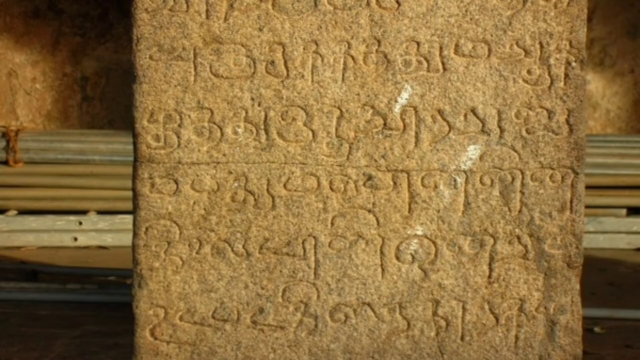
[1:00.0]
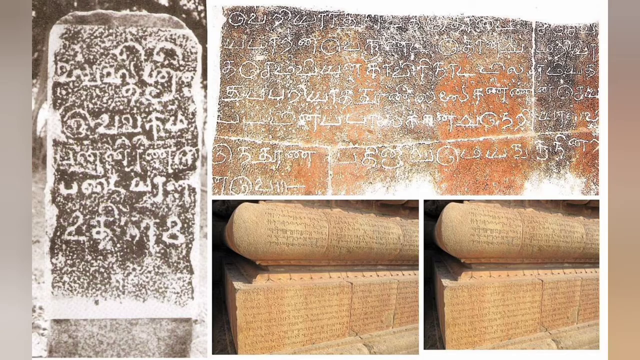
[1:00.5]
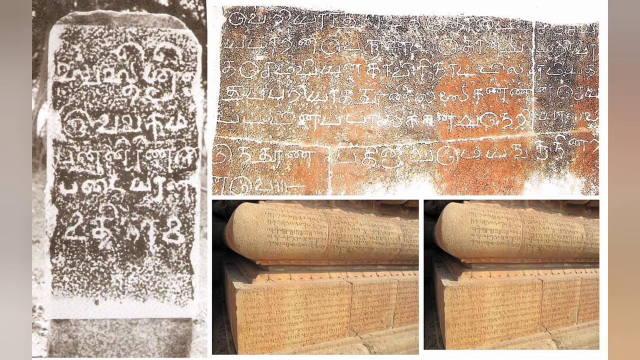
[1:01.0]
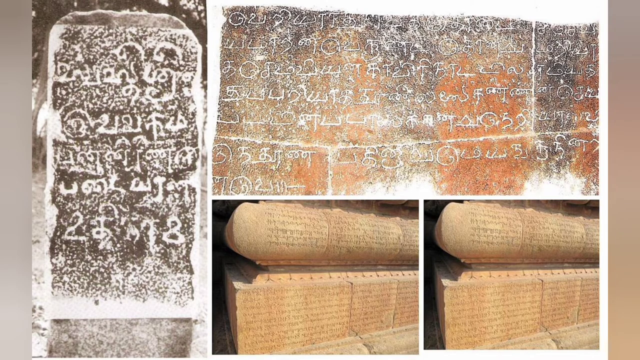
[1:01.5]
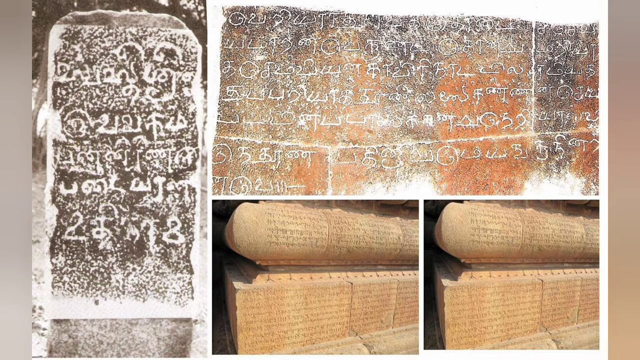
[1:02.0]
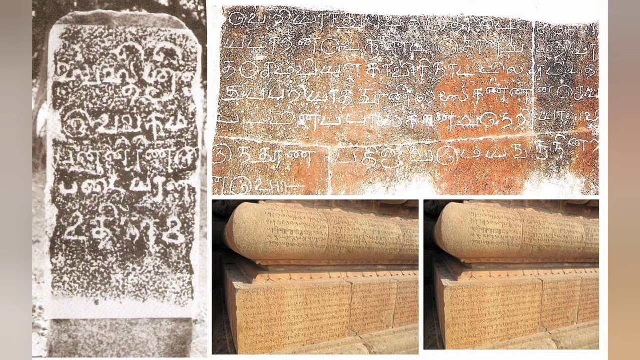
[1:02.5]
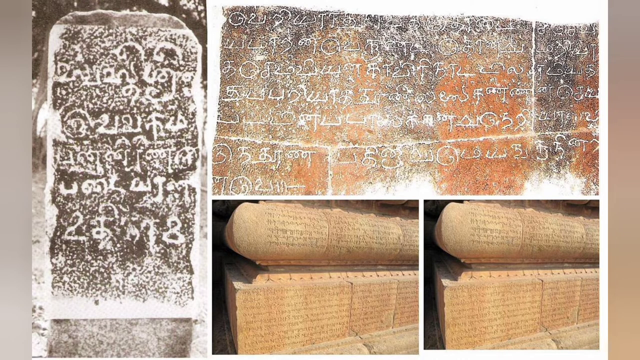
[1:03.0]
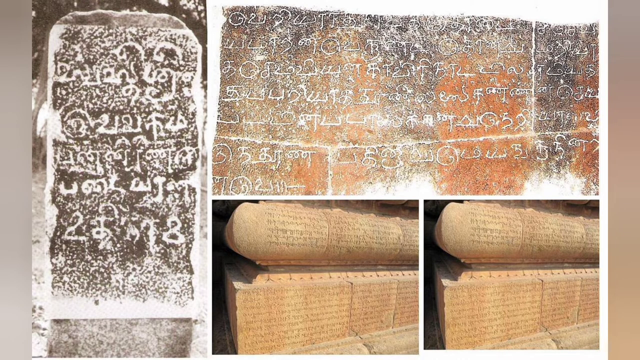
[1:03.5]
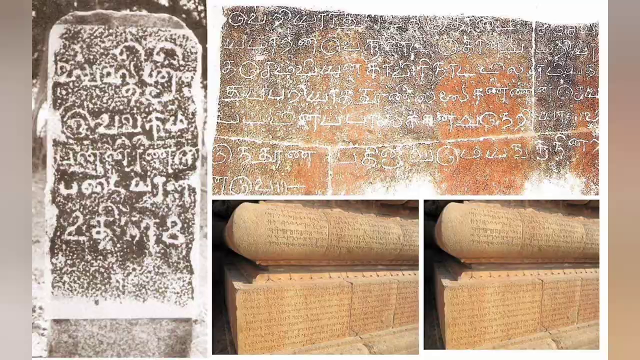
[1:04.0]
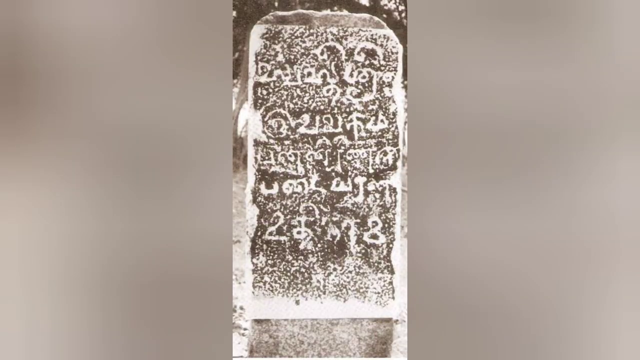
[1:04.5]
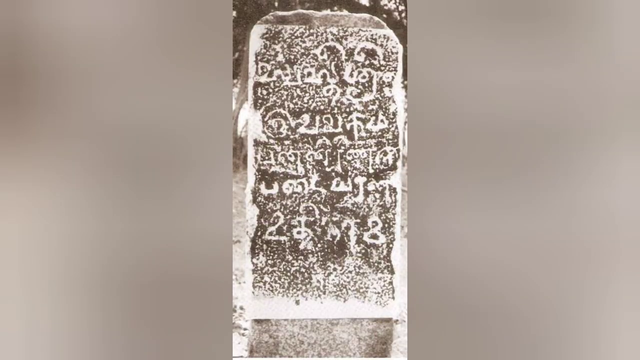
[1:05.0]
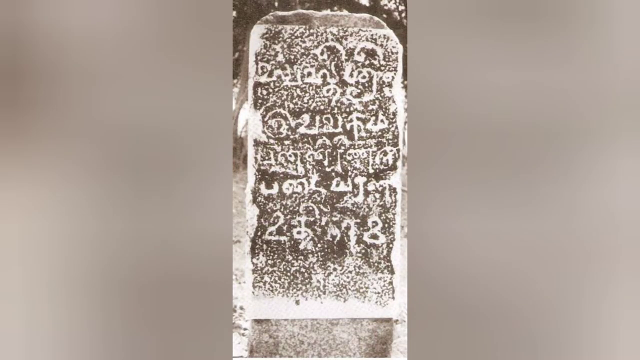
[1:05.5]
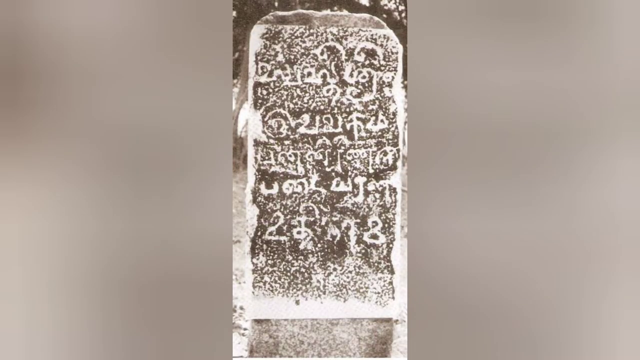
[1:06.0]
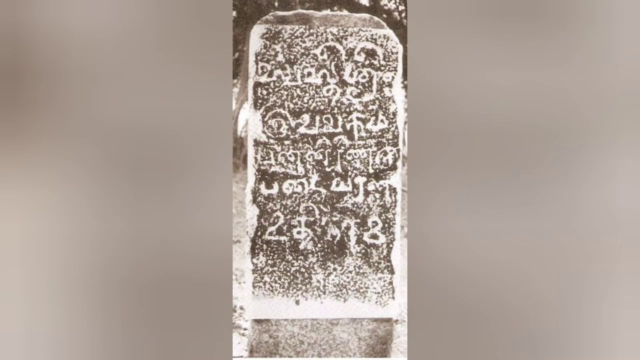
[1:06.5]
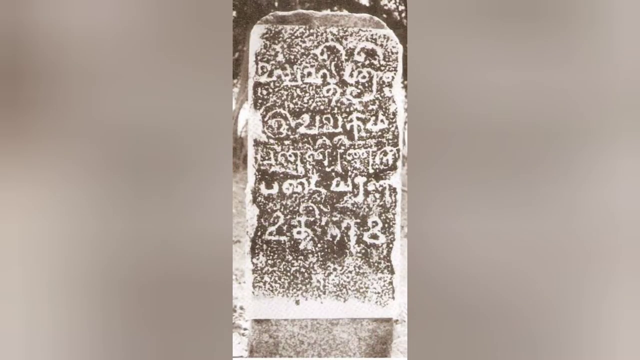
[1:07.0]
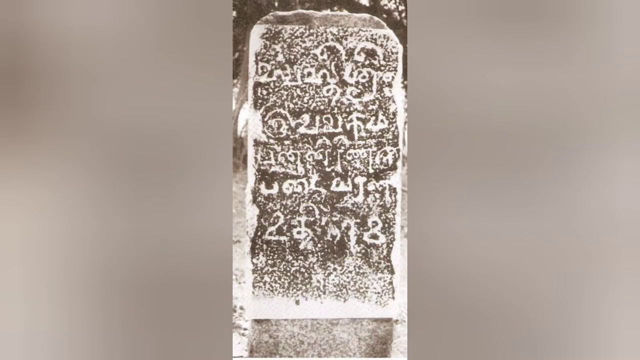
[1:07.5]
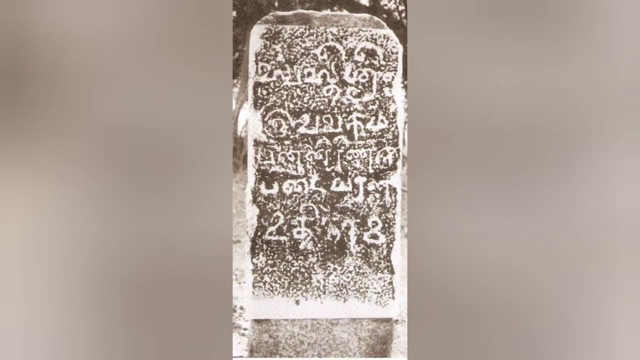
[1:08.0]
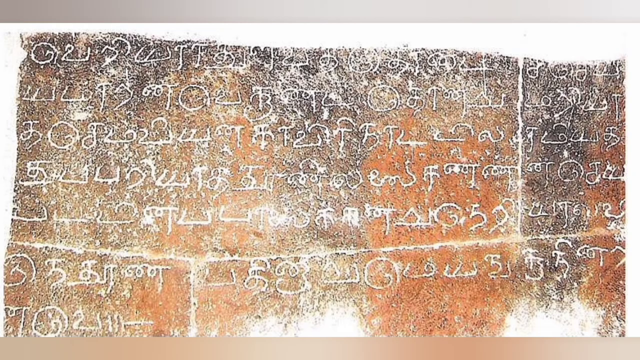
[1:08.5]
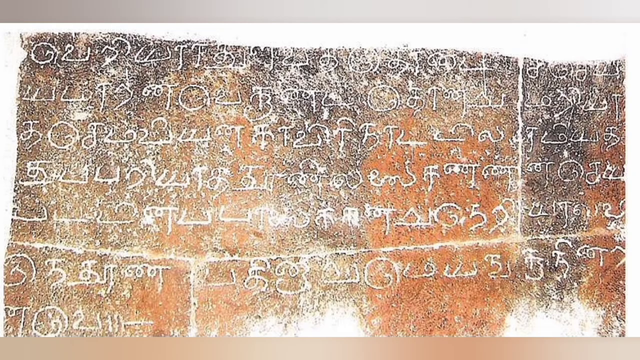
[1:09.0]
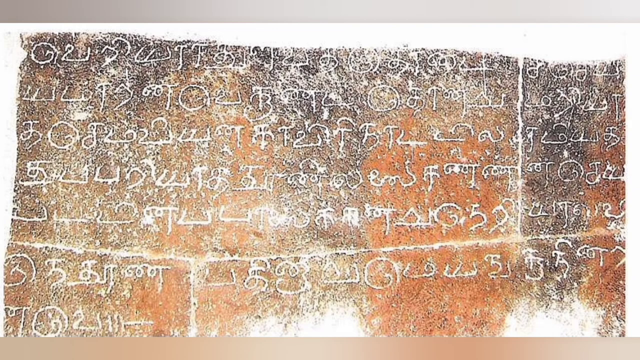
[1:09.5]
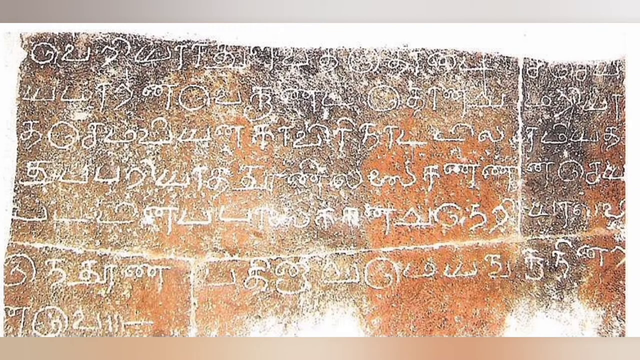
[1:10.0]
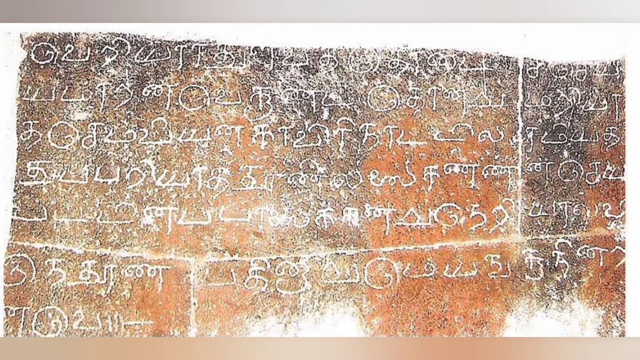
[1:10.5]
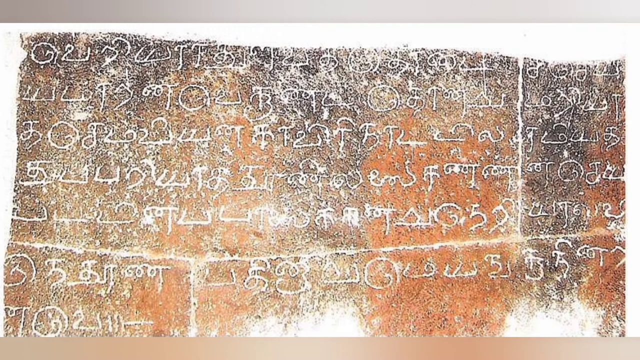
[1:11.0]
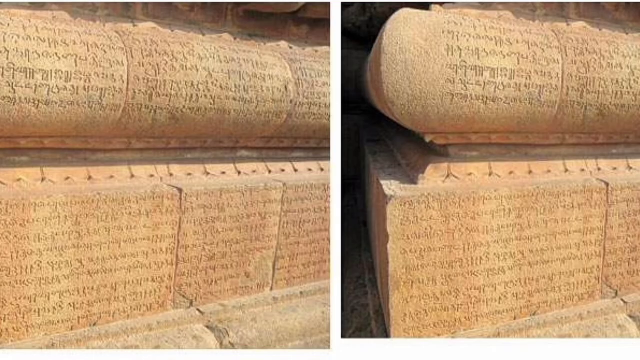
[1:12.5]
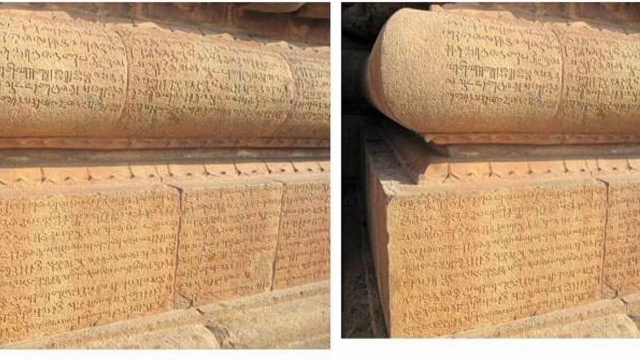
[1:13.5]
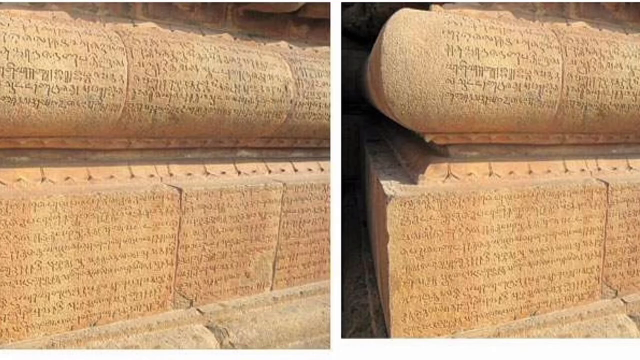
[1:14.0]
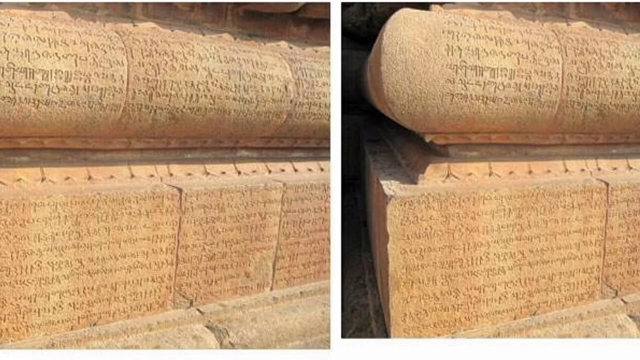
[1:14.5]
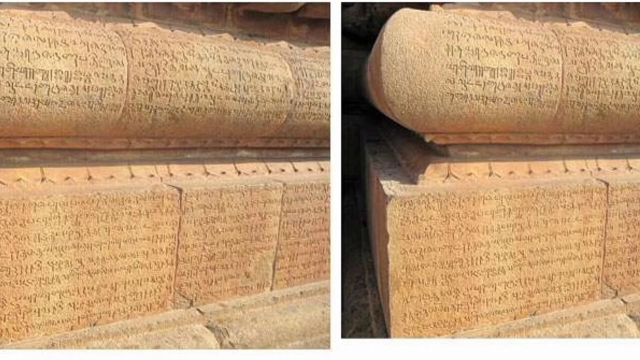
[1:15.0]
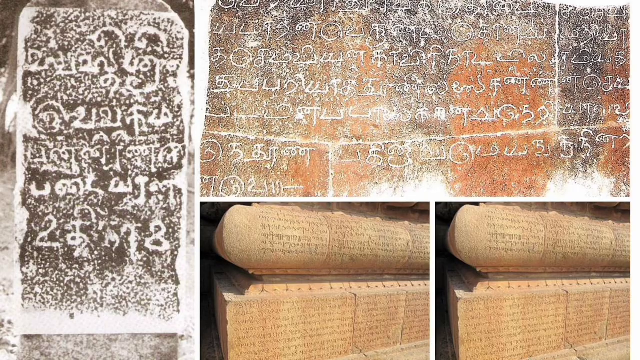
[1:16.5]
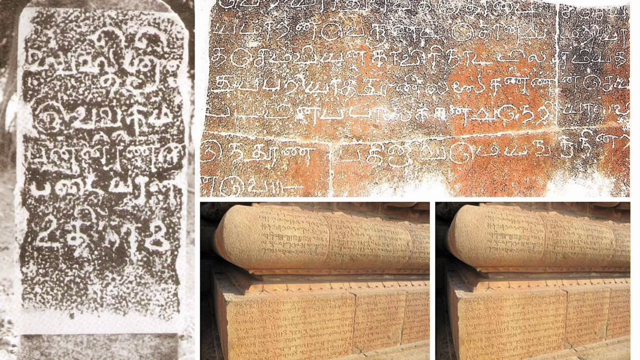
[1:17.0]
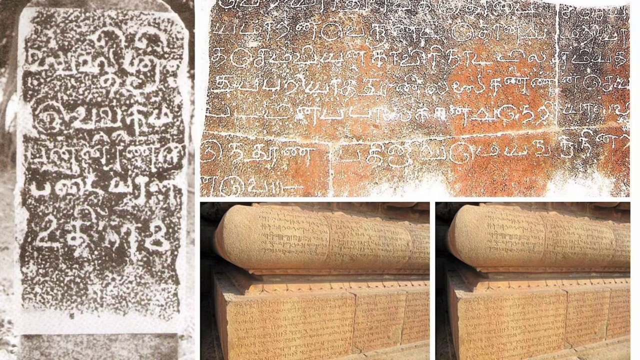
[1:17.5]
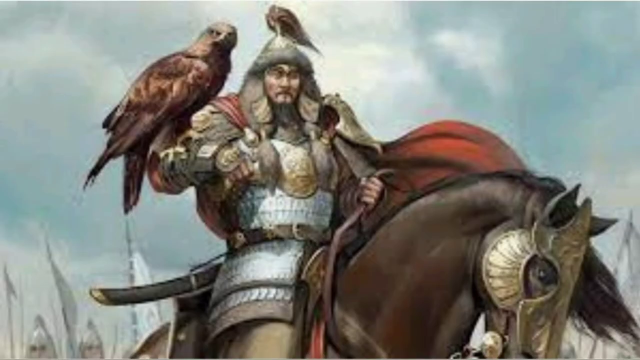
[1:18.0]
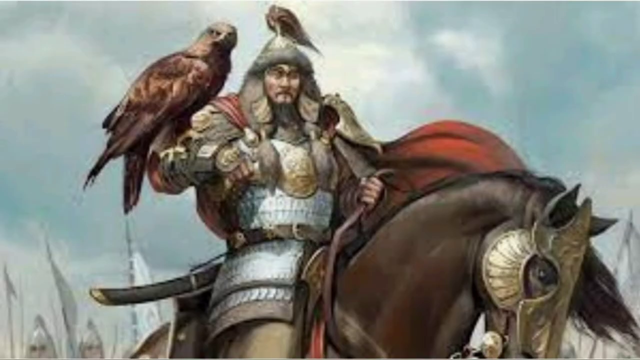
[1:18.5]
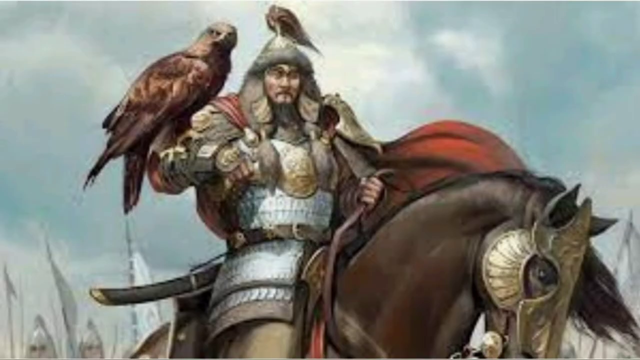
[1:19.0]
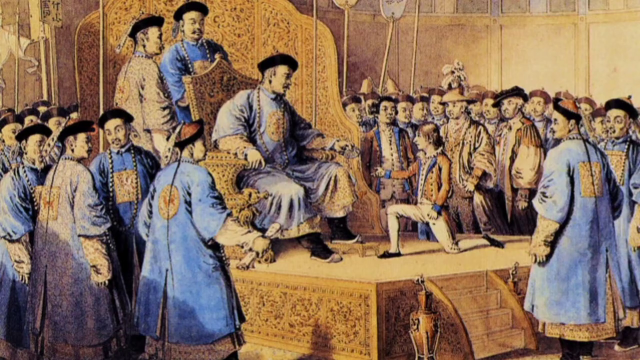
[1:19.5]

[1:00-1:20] The inscriptions appear again, including a close-up of one that is clearly not in Chinese: it is ancient, brown with white text. Outdoor carvings of text follow, shown in bright sunlight; they are a golden colour, deeply carved, and the text on them is very dense. About five or six different inscriptions are shown. Then what looks to be a warlord rides his horse, wearing a suit of armour and a red cloak, with a hawk on his arm. He seems to resemble a stereotypical image of Genghis Khan with a long moustache and looks tough. Even the horse wears armour.